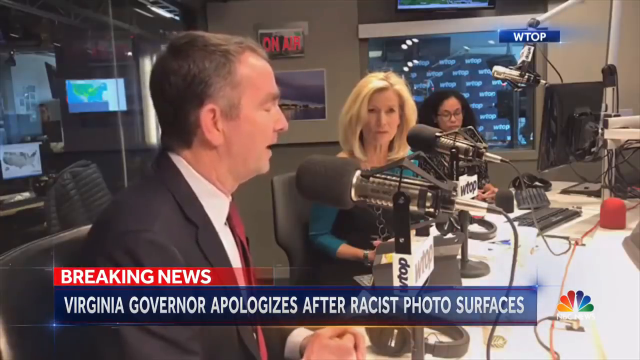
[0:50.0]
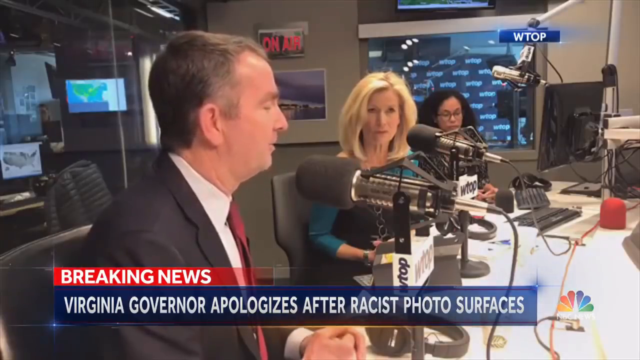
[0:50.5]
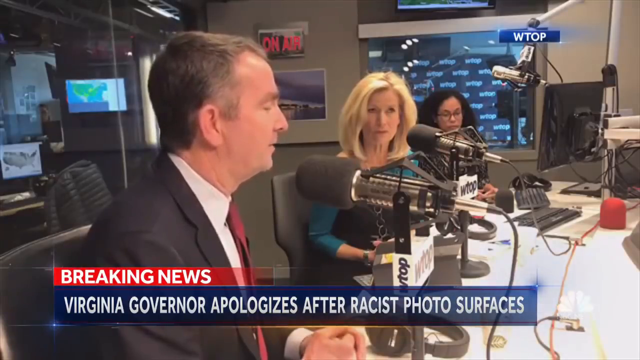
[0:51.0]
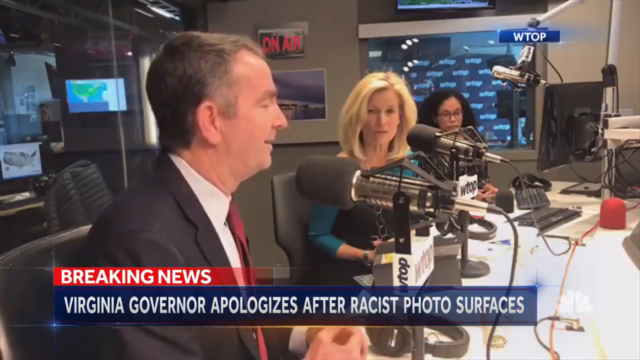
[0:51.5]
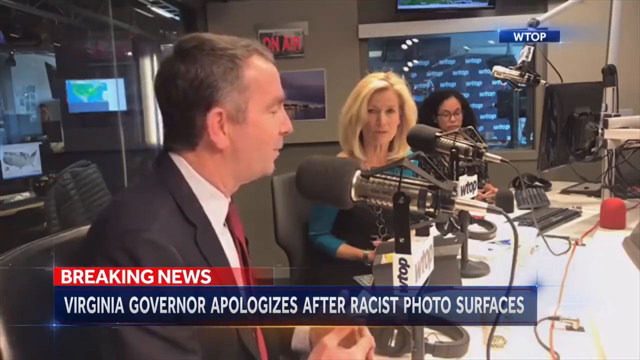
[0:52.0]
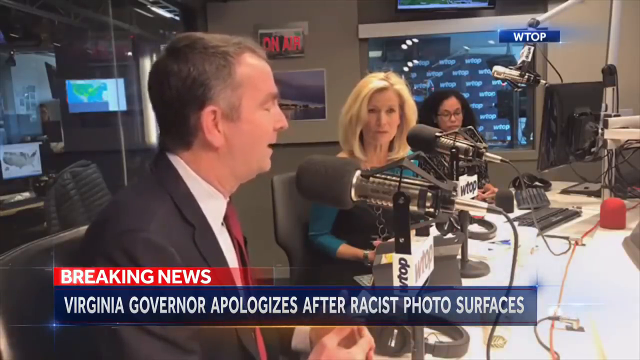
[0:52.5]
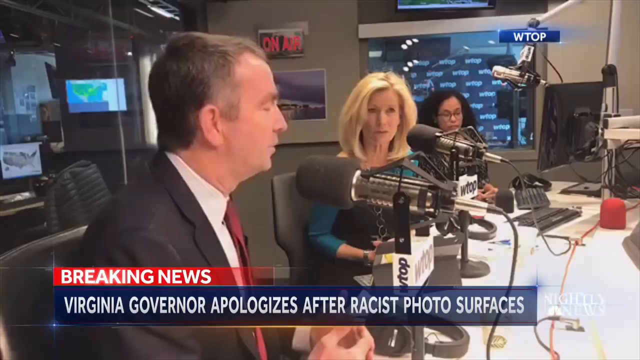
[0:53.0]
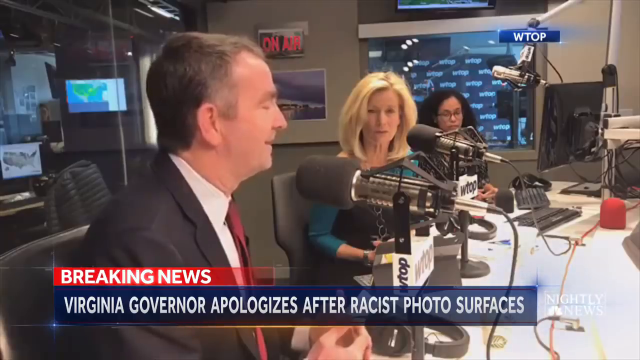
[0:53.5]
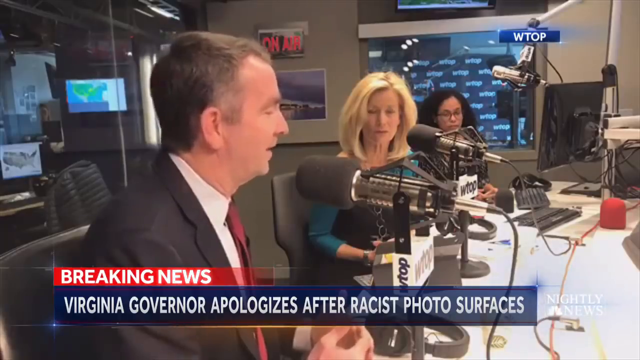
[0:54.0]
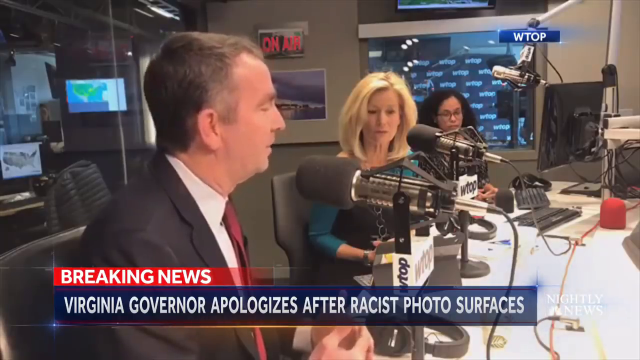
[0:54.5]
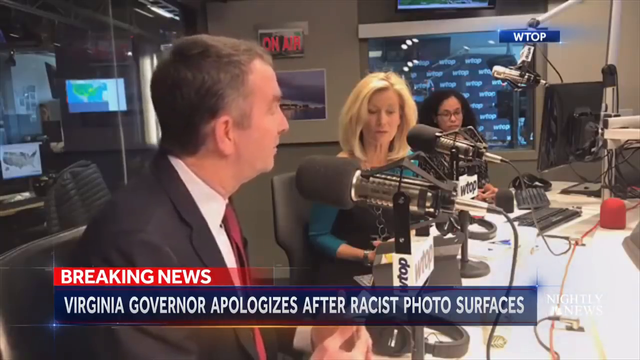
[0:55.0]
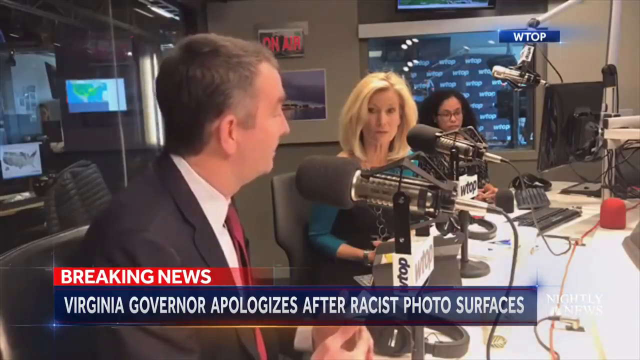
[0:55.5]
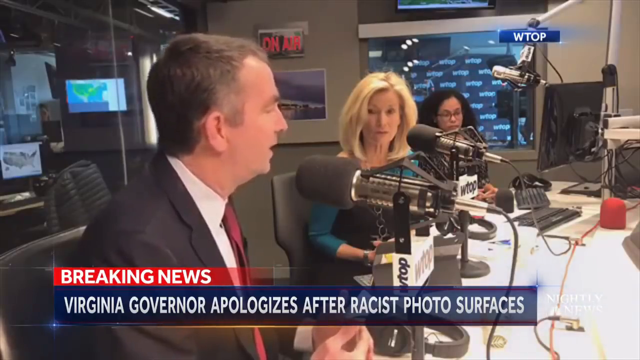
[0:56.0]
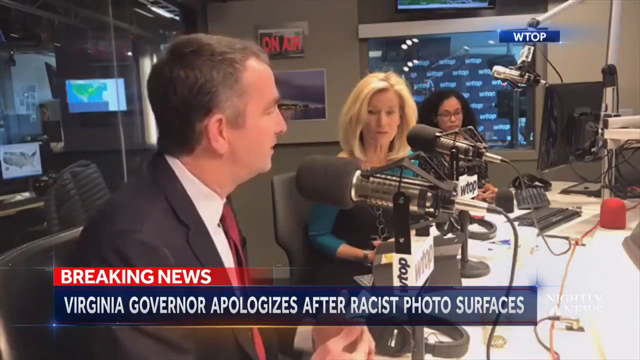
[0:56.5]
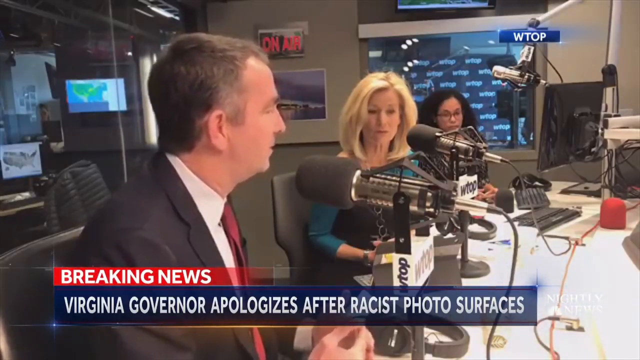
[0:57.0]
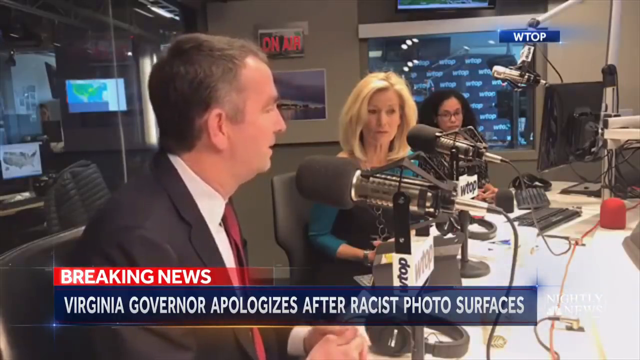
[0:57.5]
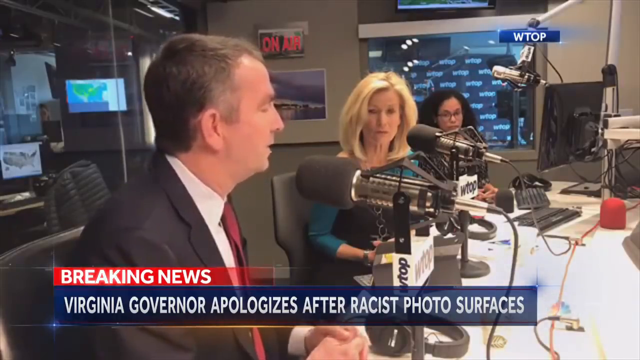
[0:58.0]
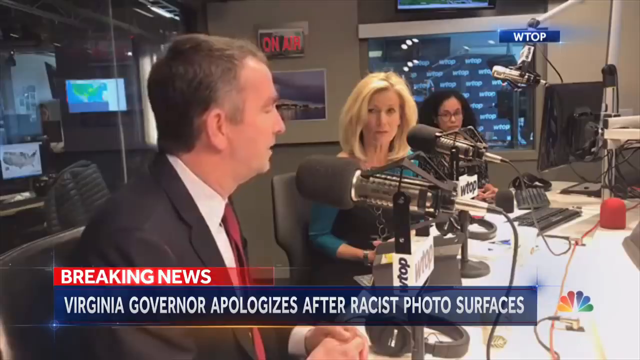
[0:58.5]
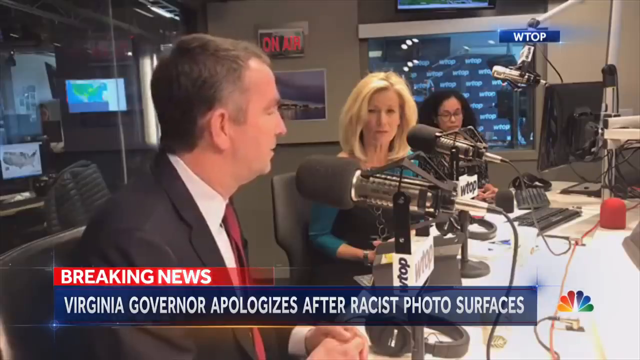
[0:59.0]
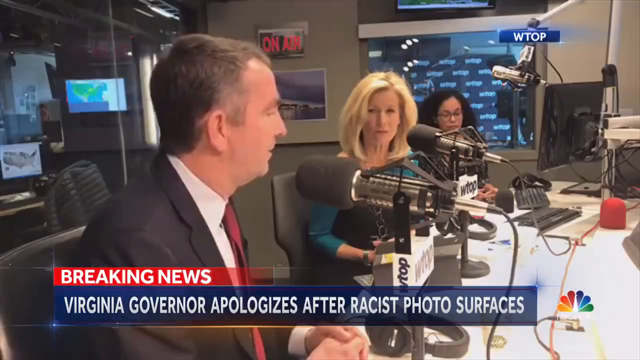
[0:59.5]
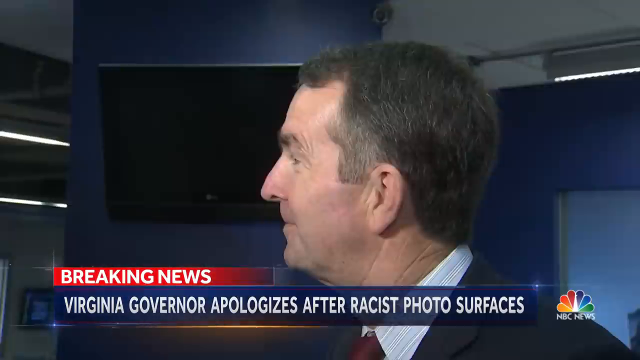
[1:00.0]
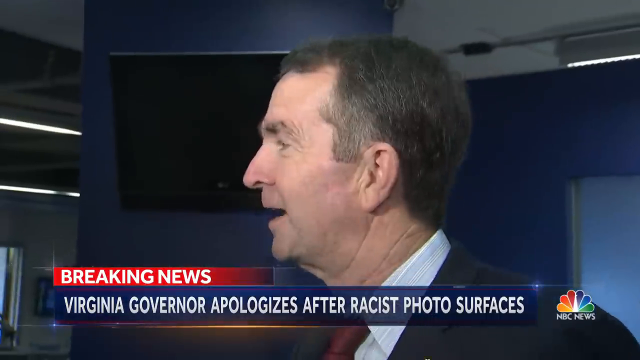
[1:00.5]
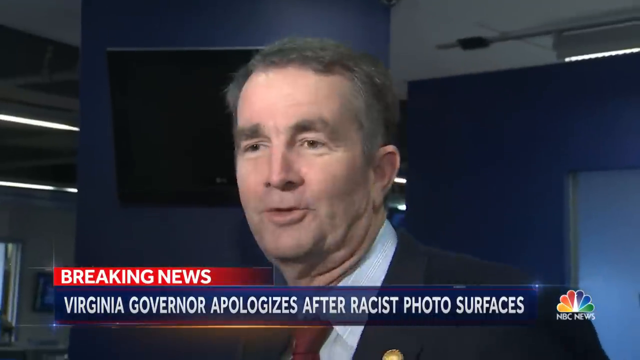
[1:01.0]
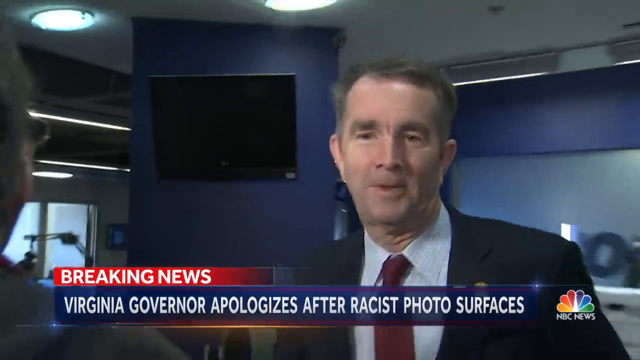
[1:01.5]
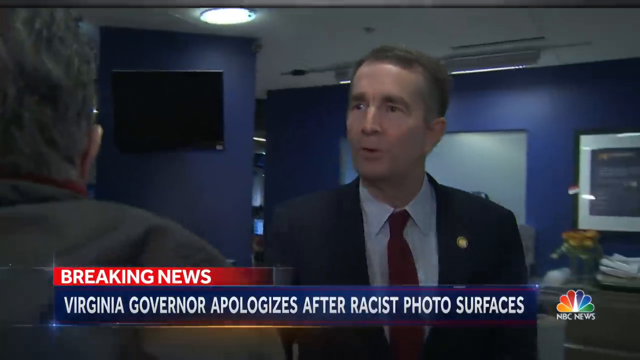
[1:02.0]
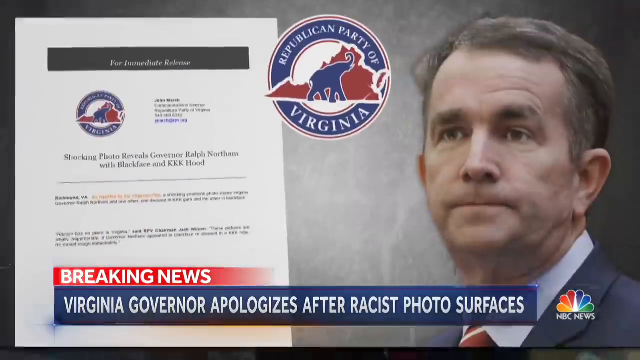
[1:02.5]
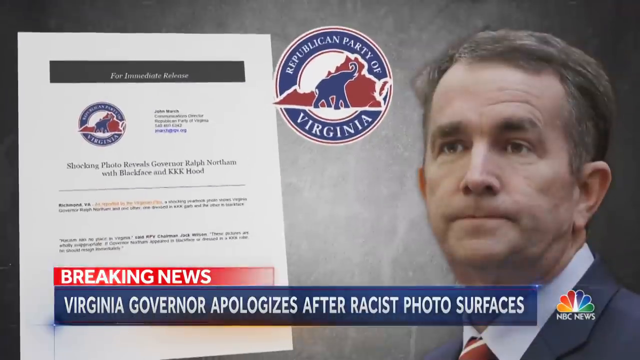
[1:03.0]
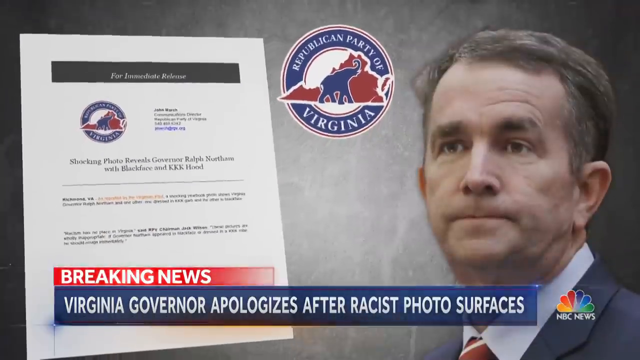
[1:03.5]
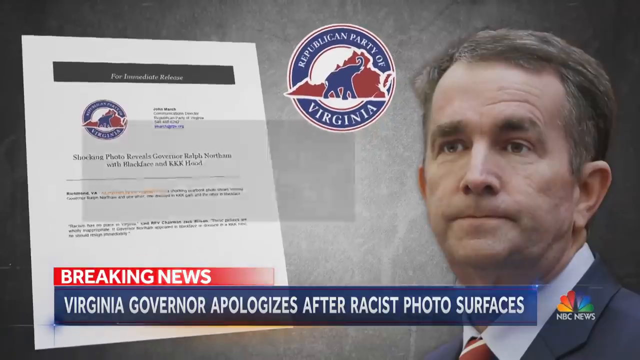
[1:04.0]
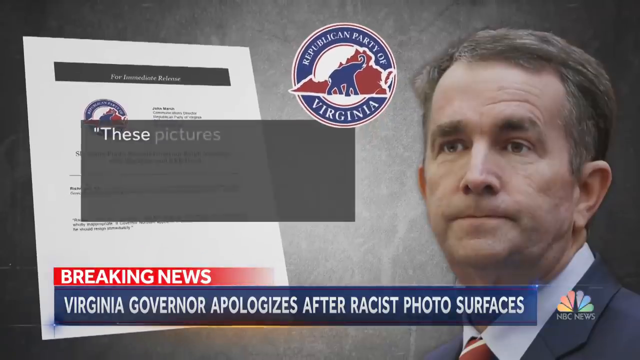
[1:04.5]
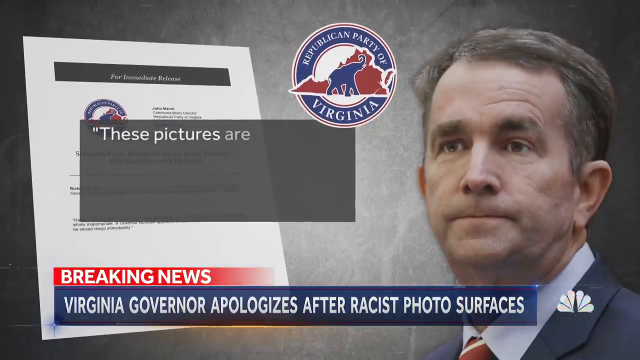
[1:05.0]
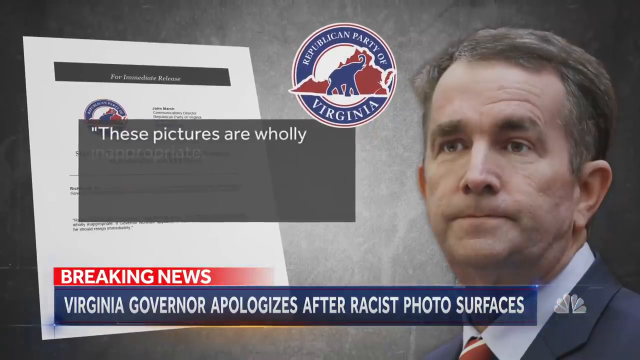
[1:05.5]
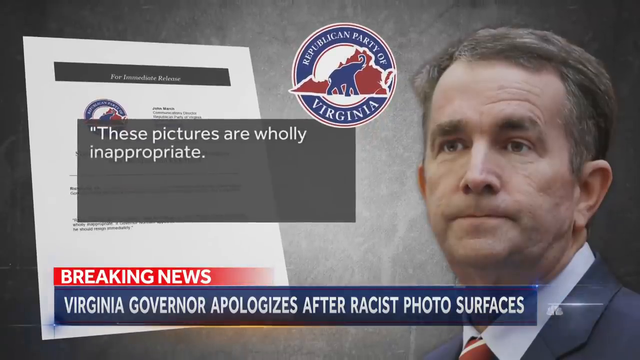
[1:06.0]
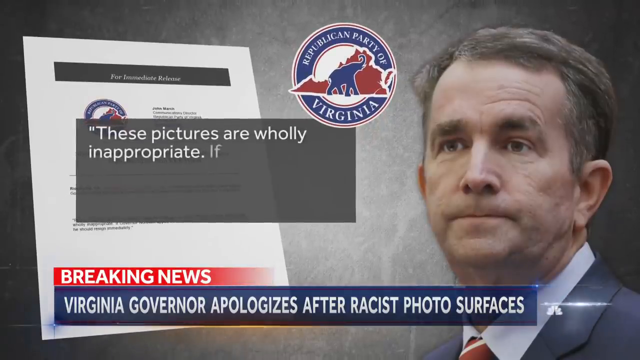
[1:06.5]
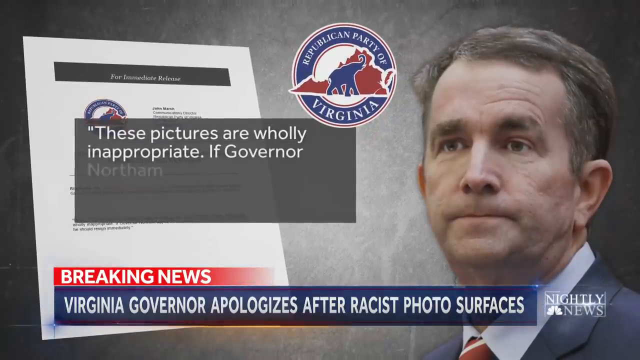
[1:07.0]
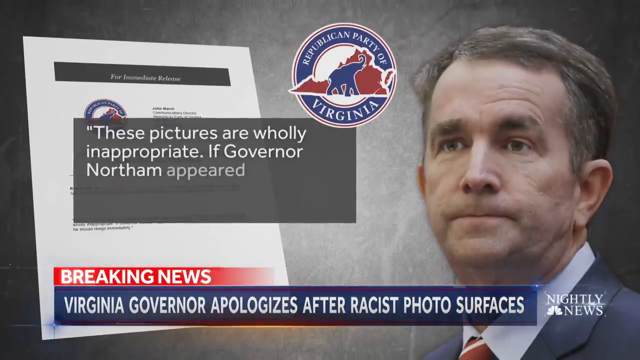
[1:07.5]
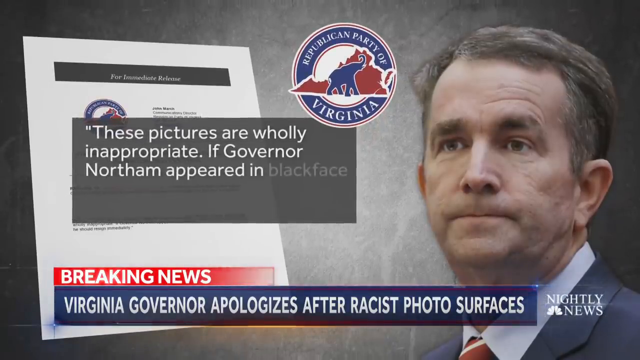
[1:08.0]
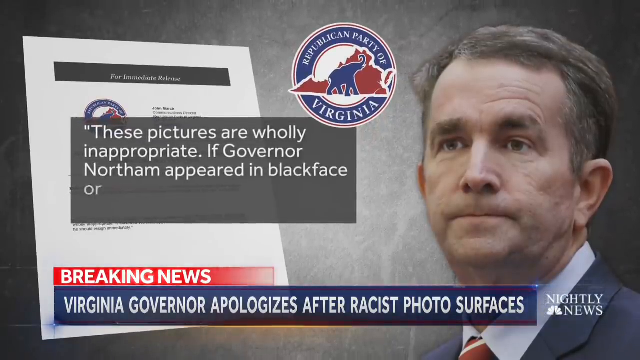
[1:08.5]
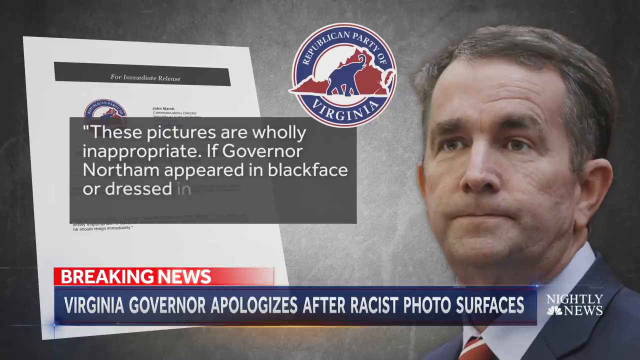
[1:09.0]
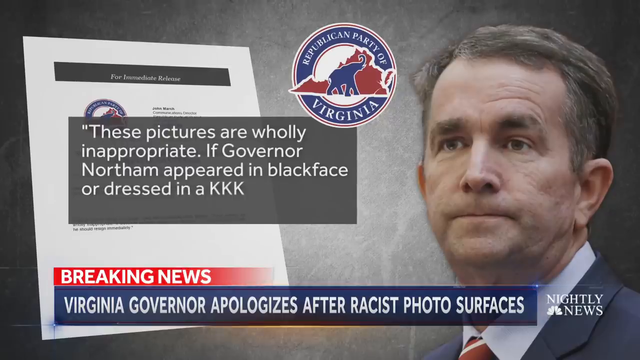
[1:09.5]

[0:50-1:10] The governor is seen only in side profile, talking at a steady pace. He is not very expressive, moving only his head rather than his shoulders or hands, and sometimes turns it slightly to the left to make eye contact with the two women on the panel. The radio station has mounted monitors, computer monitors, many mics, cables everywhere, and keyboards. After a few seconds it cuts to another interview of him in a close-up headshot, where he seems to be talking to reporters; the camera zooms out to show him talking to one of the reporters, and he shakes hands with them. Next comes a photograph with the seal of the Republican Party of Virginia and a "for immediate release" document from the Republican Party of Virginia. Most of the document is too blurry to read, except its title: "Shocking photo reveals Governor Ralph Northam with blackface and KKK hood." To the right is a cutout of the Virginia governor's head. A box then appears with a text overlay beginning "These pictures are wholly inappropriate. If Governor Northam appeared in blackface or dressed in a KKK robe."